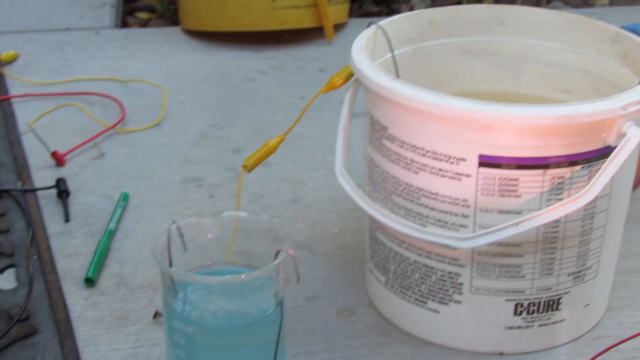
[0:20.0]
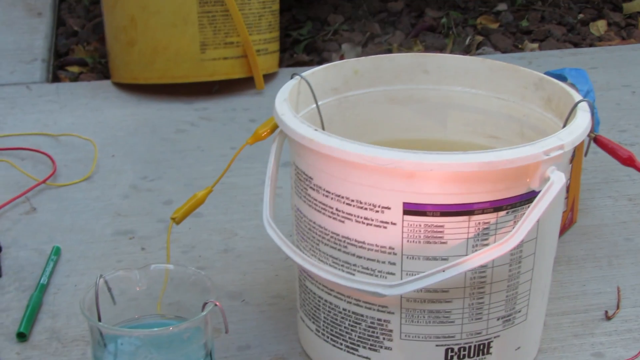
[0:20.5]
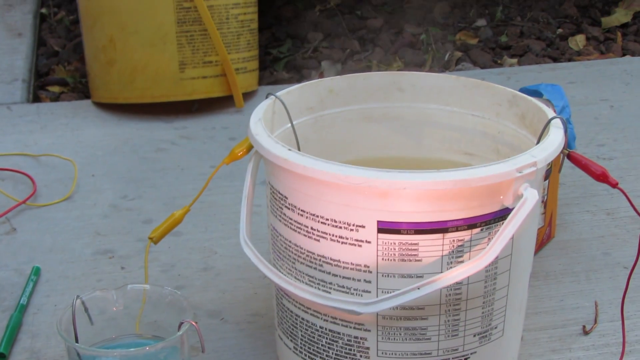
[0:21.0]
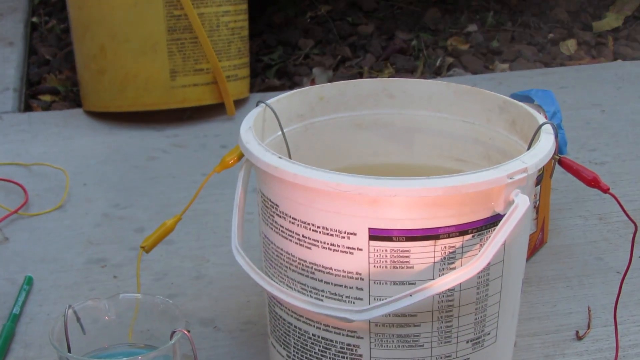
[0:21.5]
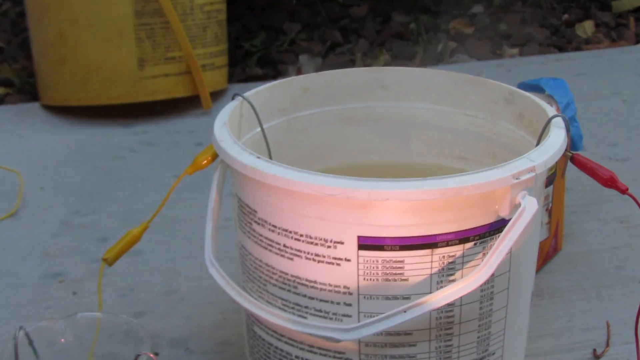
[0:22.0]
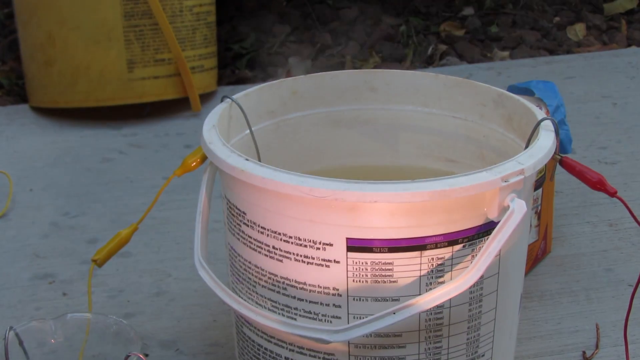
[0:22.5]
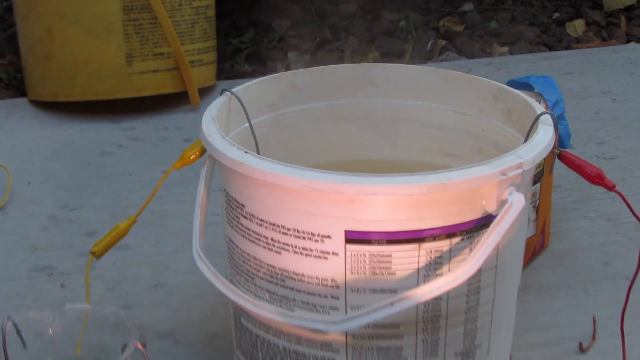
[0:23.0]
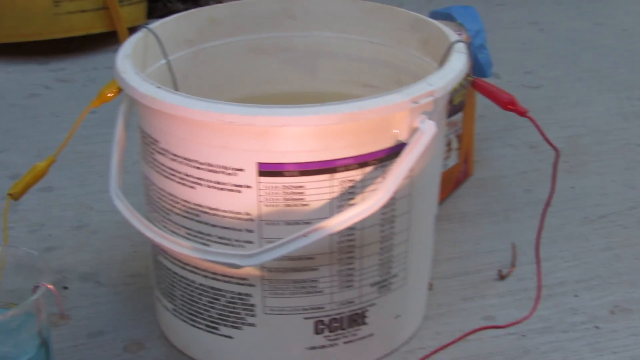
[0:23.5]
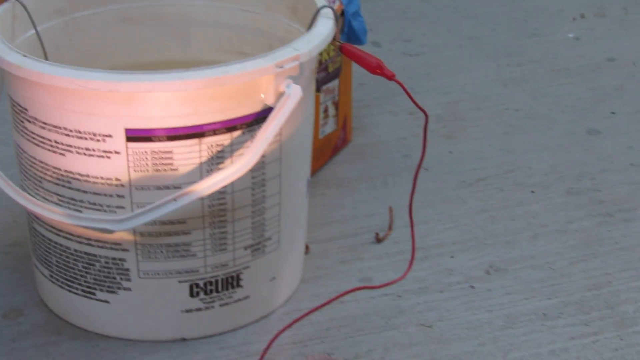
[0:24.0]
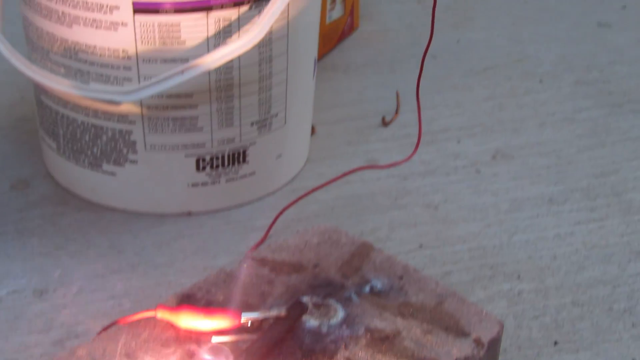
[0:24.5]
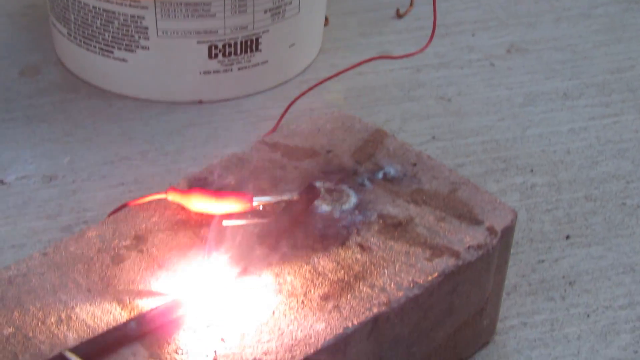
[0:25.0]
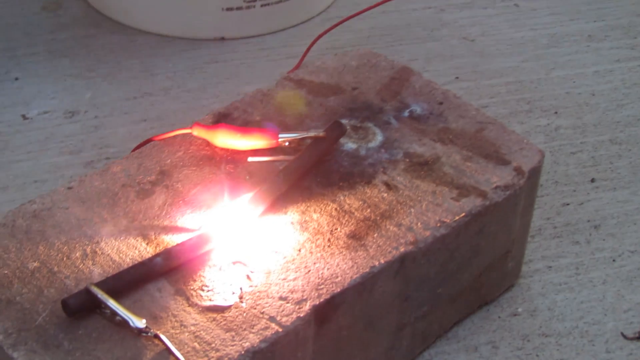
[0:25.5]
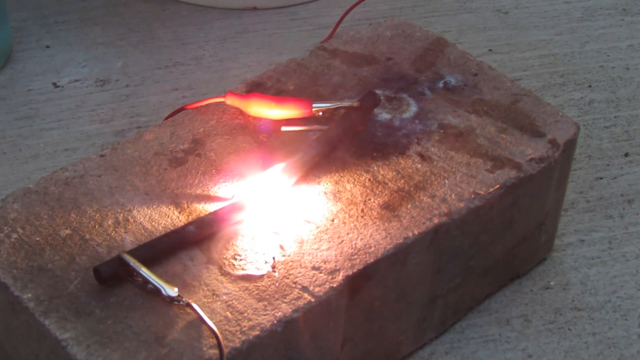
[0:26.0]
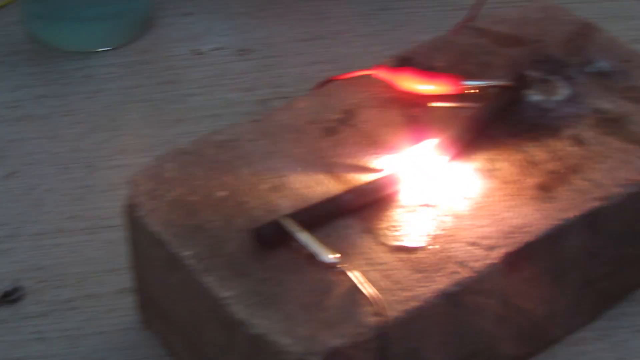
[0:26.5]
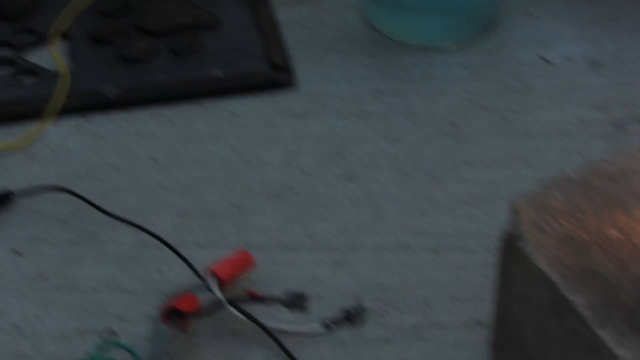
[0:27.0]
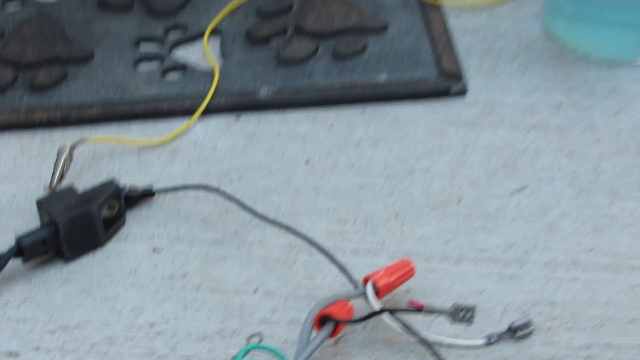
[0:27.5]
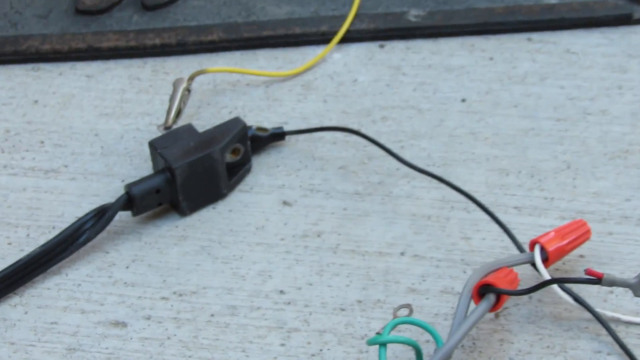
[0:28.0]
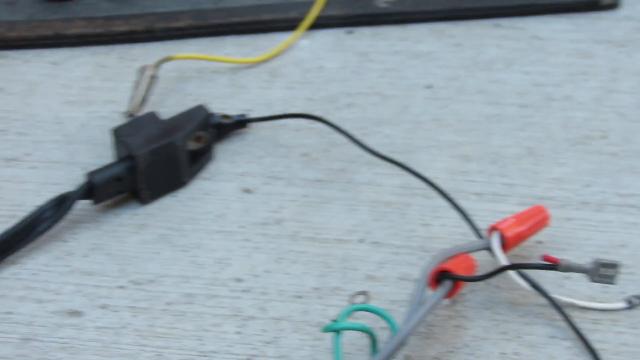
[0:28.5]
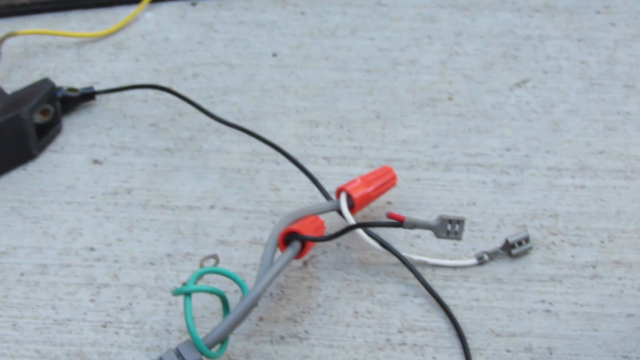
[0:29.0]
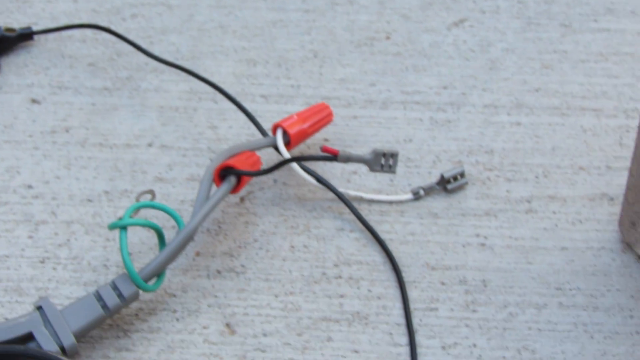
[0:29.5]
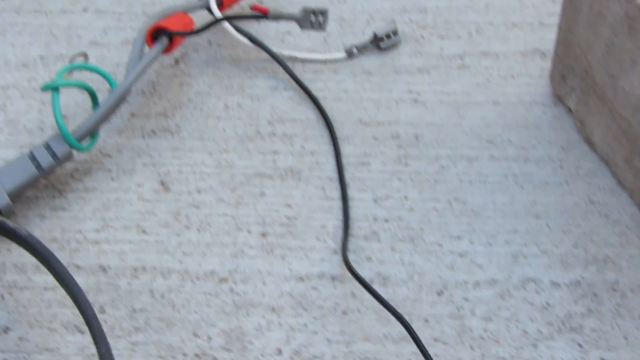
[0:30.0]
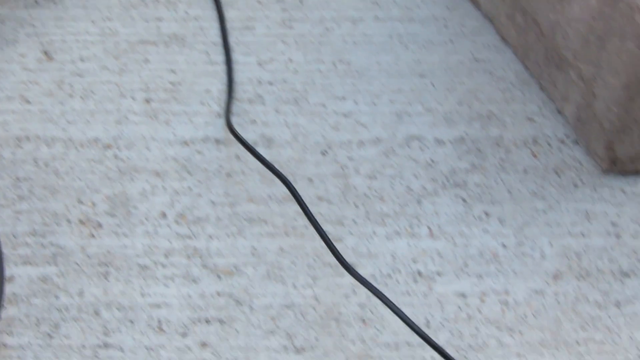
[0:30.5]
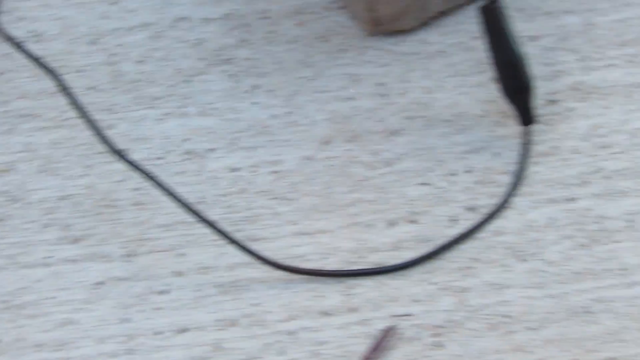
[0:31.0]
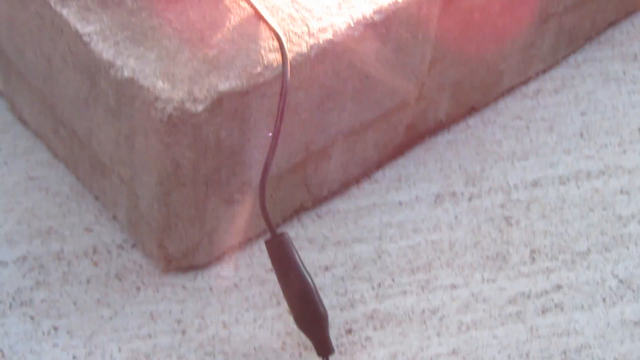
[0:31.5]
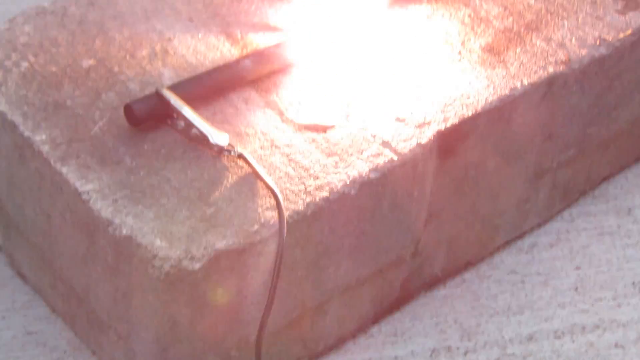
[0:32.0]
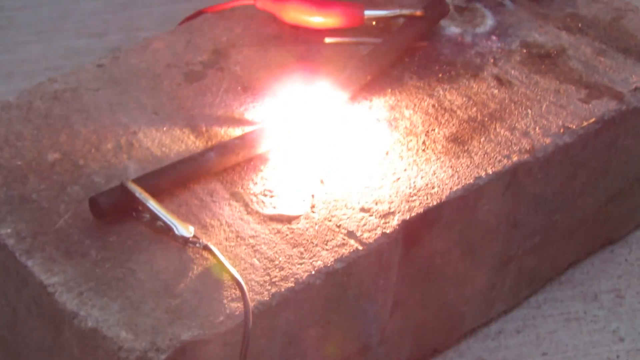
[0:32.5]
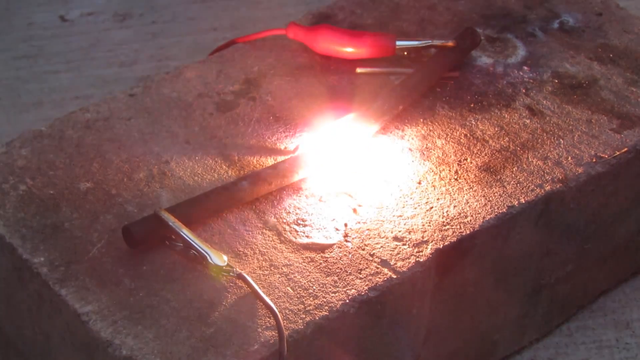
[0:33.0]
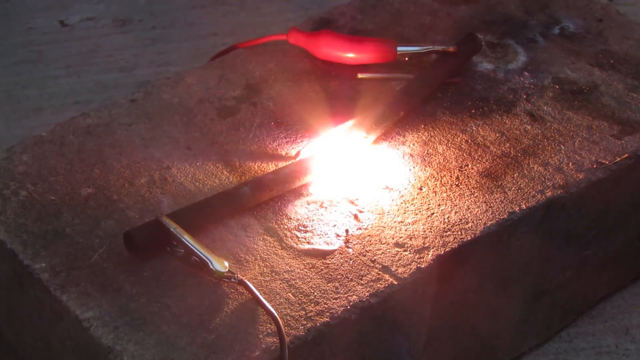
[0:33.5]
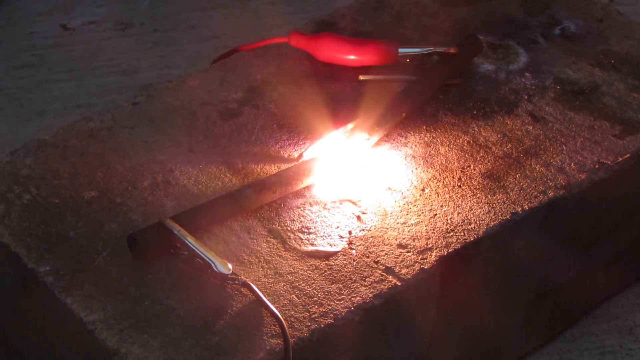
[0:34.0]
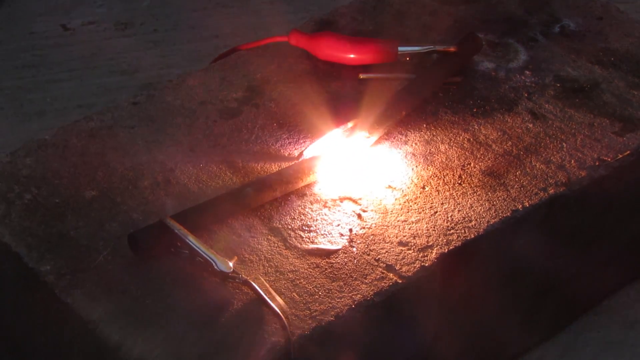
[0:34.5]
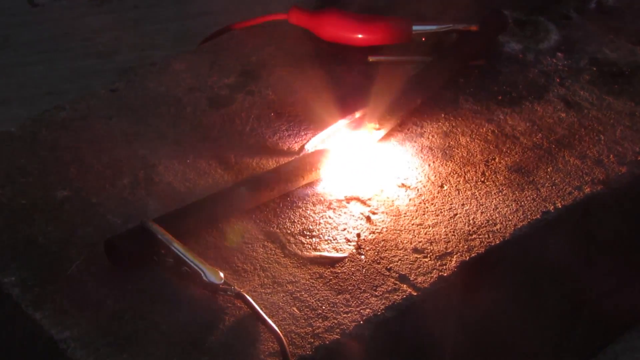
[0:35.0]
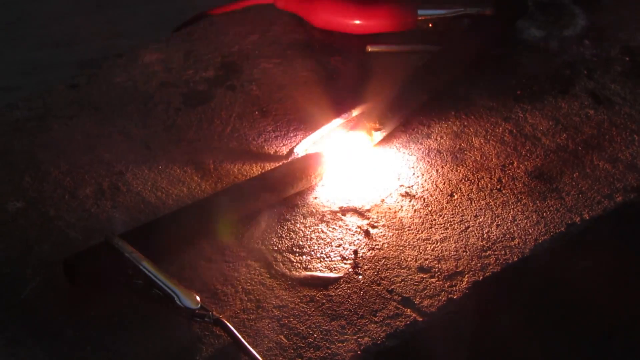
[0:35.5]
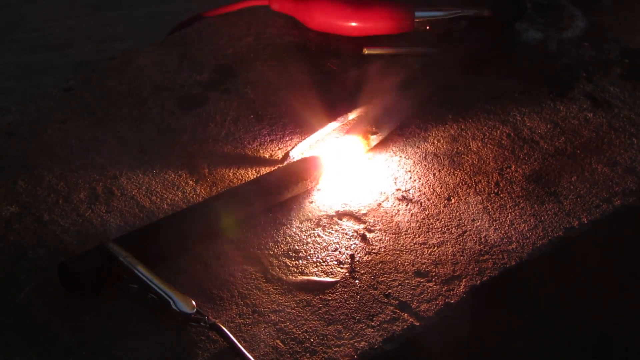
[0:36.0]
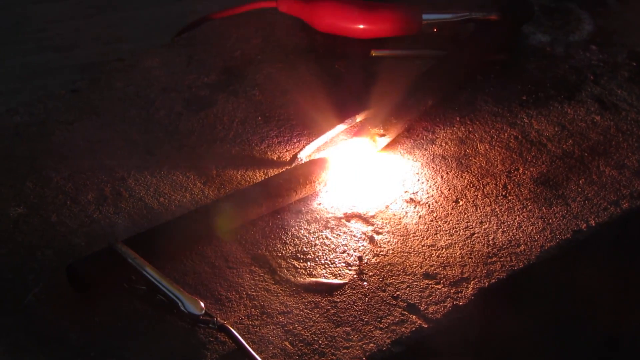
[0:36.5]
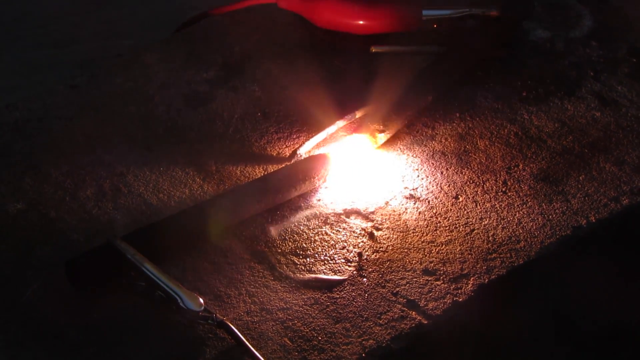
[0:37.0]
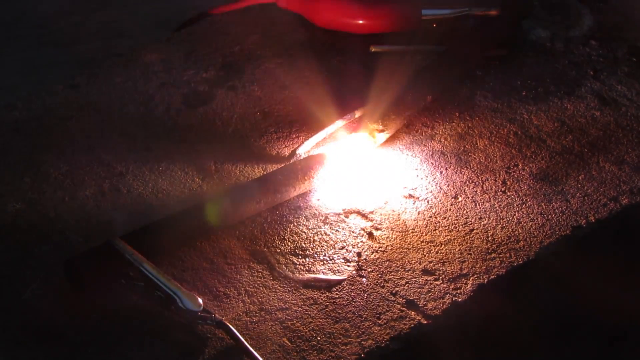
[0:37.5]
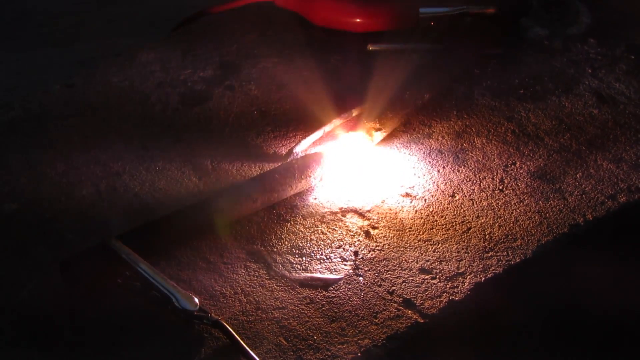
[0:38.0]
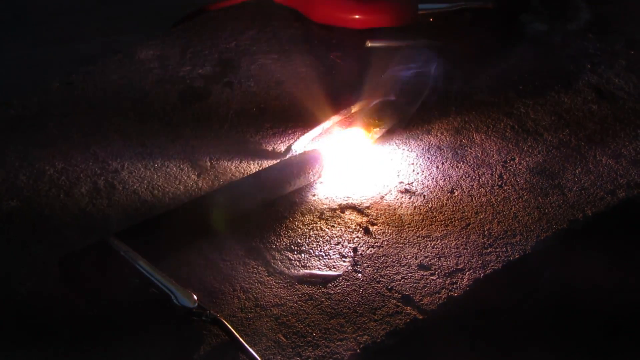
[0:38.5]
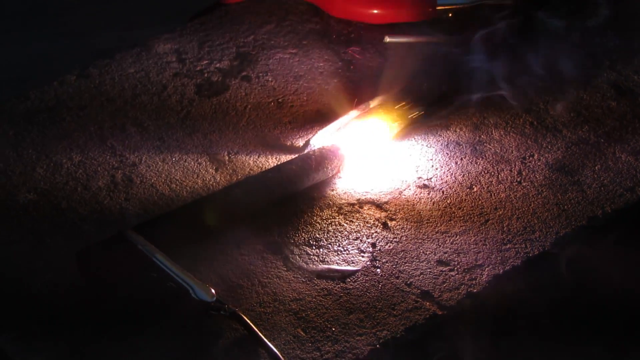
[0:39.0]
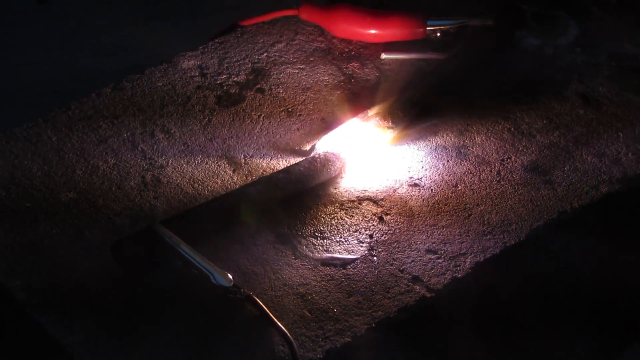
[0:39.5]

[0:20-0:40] The view shows the white bucket and the small plastic container with blue liquid. A green marker is to the left of the blue liquid container, and a few red and yellow cords are farther away from it. The camera moves right until the white bucket is in full view, with part of a yellow bucket behind it on the ground, and some sort of smoke comes from the white bucket. The camera zooms in, moves right and goes below the bucket to the brick with the two objects on it. The light there has now become more of a flame: two black cylinders on the brick are making the light, combining to create it in the middle between them. The red tool with the cord is still at the top right of the brick, and smoke comes from the light. The camera suddenly moves left to show the mat and the container with the blue liquid, zooms in on the connecting cord, then moves right to a red object on that cord, which also has a few little gray connectors. The camera moves toward the bottom right, still zoomed in, following the black cord as it goes toward the brick with the light on it. The light is shown in a closer shot, still going, and as the camera keeps zooming in the scene becomes dark again.